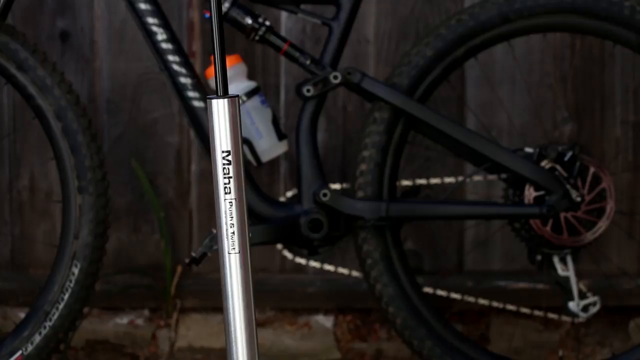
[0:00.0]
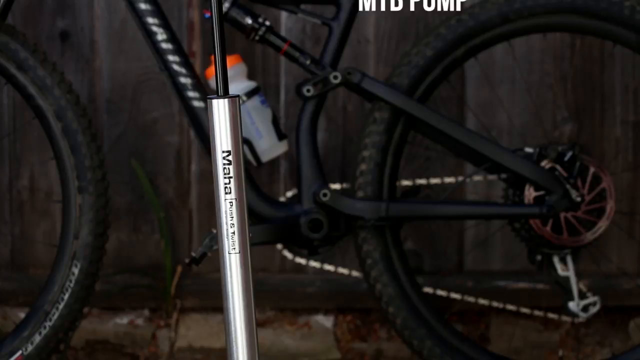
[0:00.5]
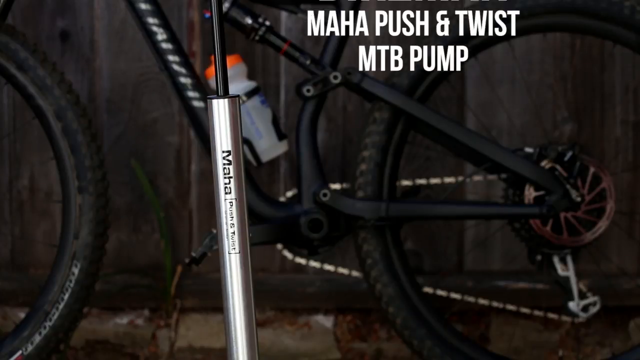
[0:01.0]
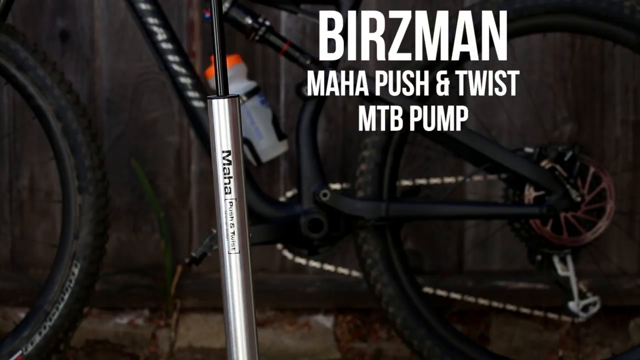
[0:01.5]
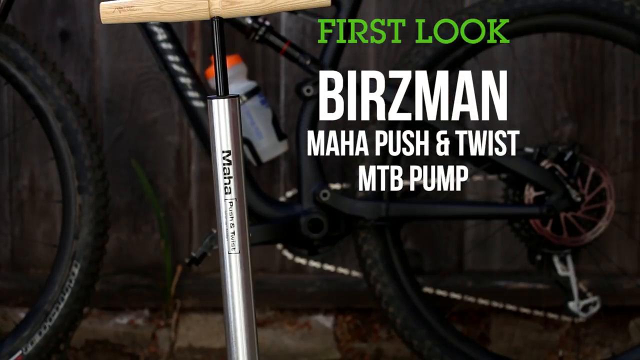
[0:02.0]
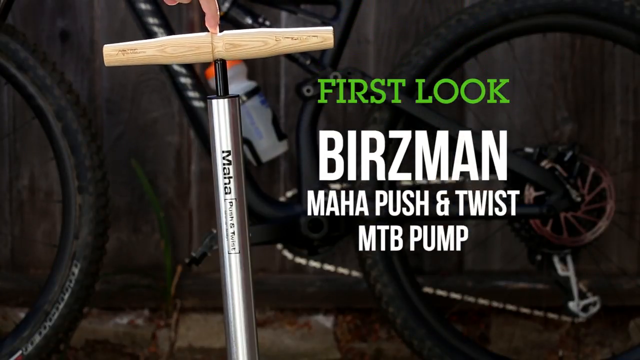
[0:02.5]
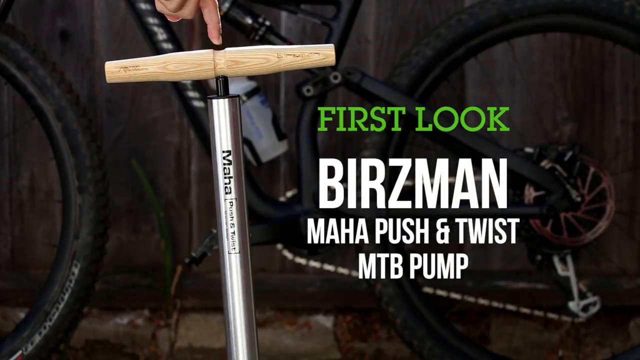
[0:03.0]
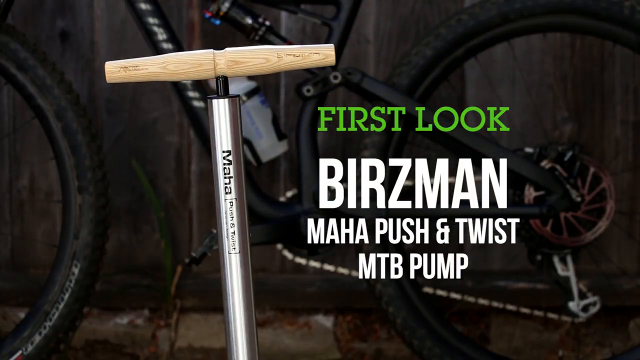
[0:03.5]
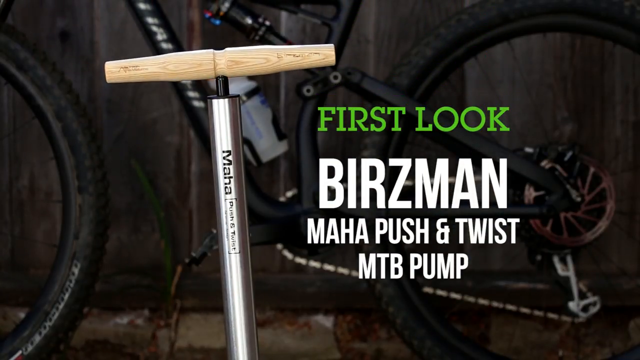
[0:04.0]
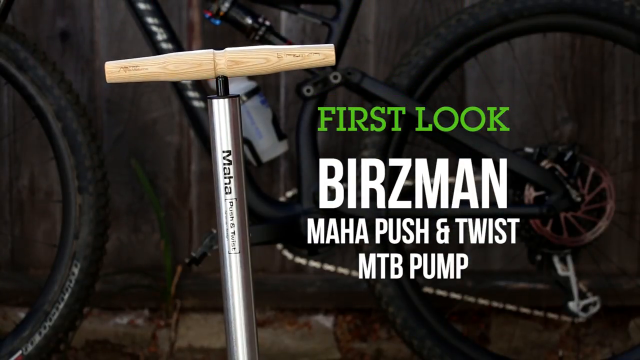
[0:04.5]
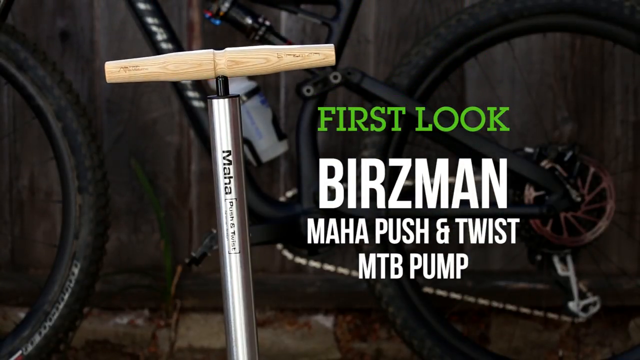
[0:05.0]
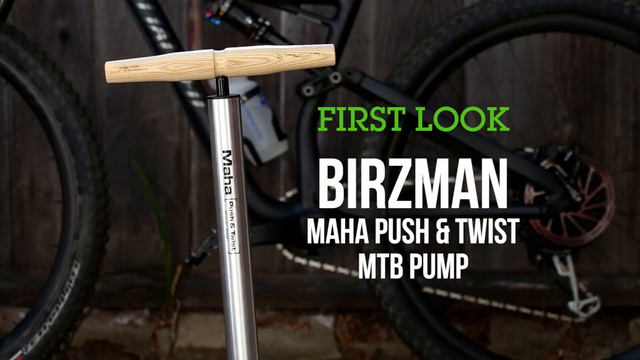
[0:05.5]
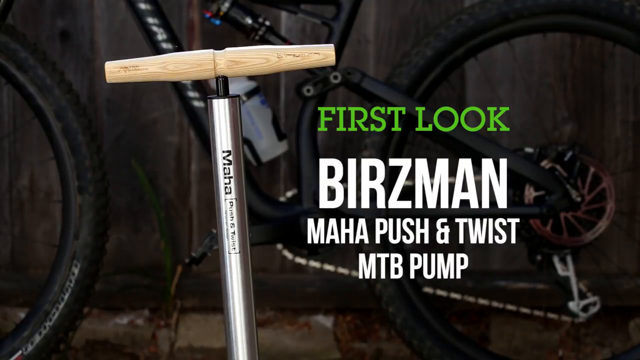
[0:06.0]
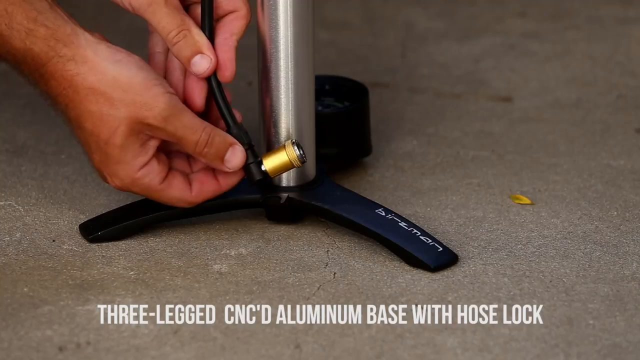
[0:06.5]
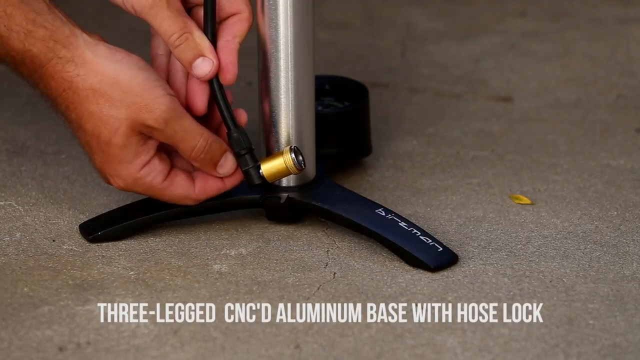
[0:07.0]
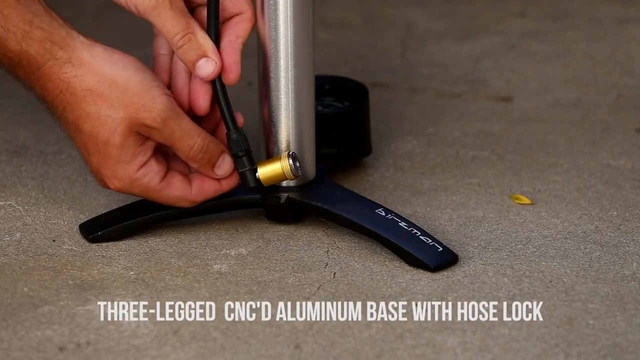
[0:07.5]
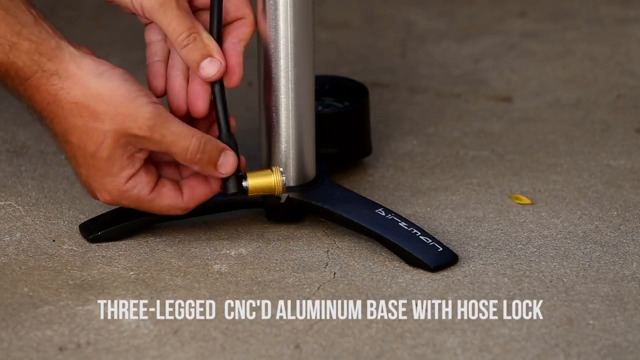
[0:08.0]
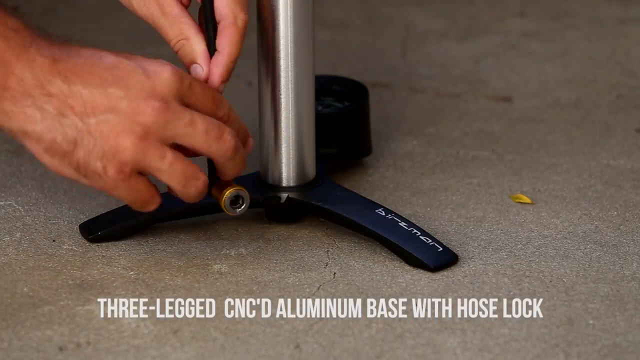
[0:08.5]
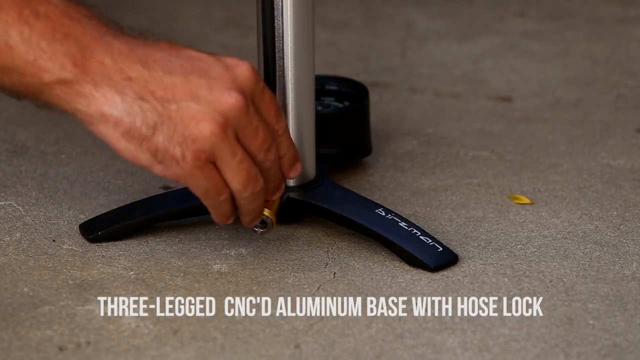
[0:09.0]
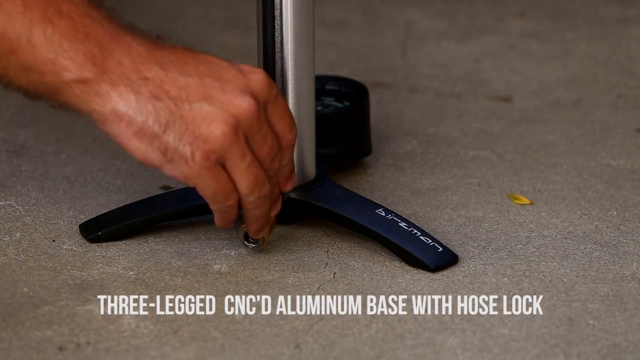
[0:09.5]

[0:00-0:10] The text "first look" appears in a green font, with another noticeable text below it in a white, bold font. A bicycle and a person are visible on the screen; the person appears to be fixing the bicycle, which is black and dark in color. A water bottle is wrapped on the bicycle. The bicycle appears to be in a dark place in a room, possibly the garage of a home where it is kept.